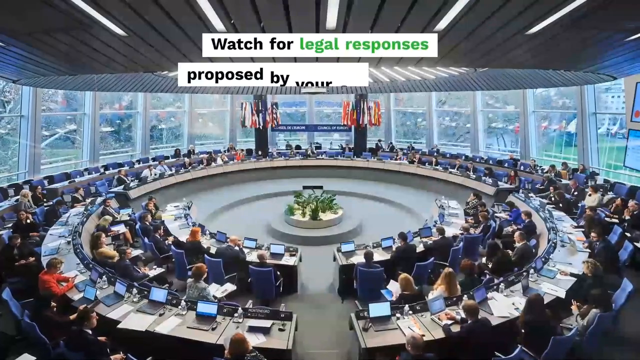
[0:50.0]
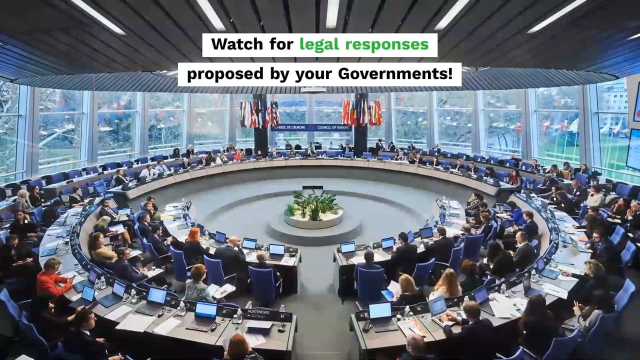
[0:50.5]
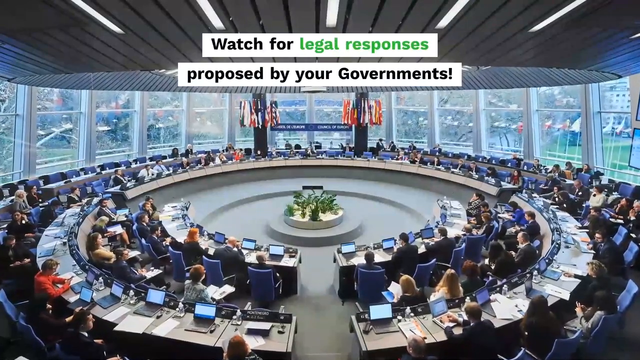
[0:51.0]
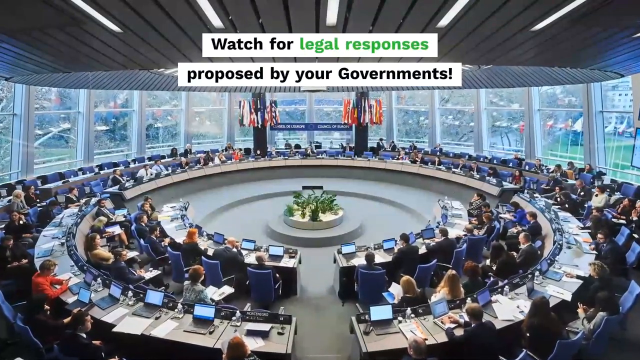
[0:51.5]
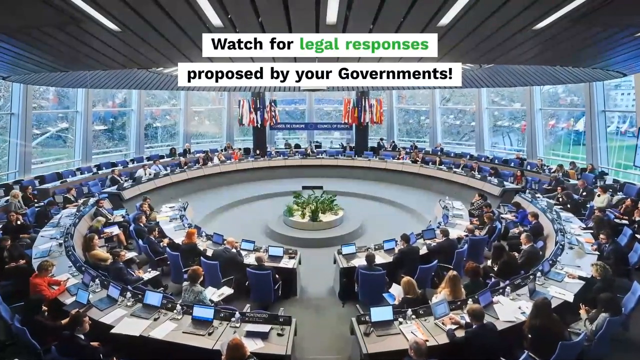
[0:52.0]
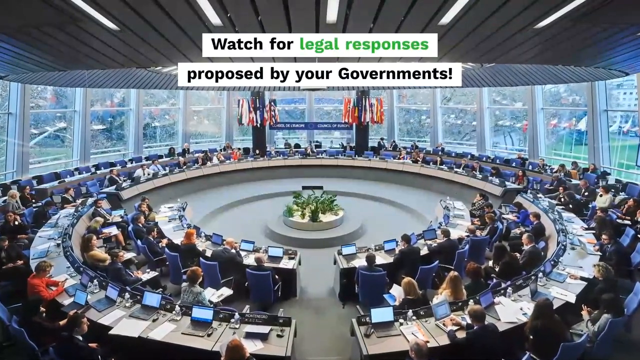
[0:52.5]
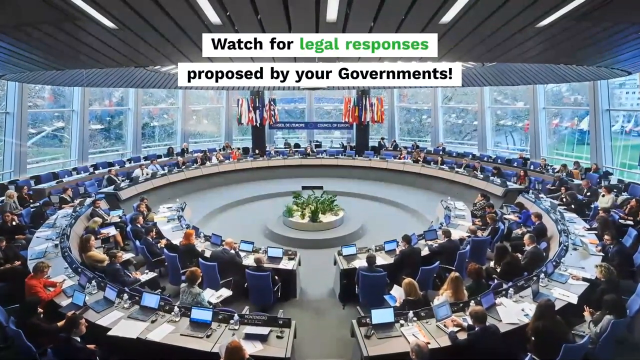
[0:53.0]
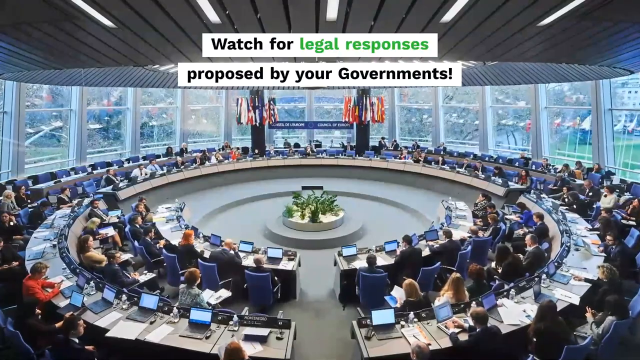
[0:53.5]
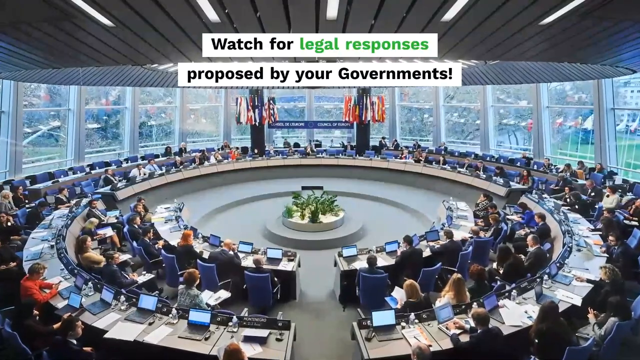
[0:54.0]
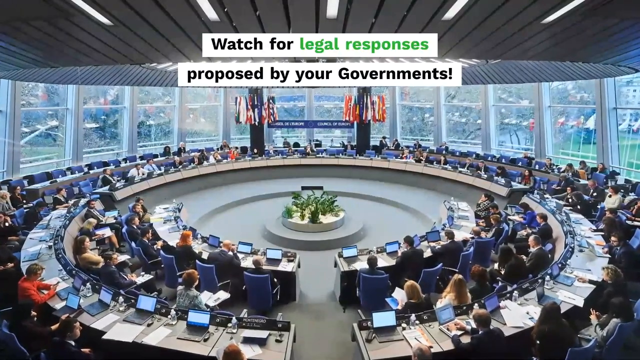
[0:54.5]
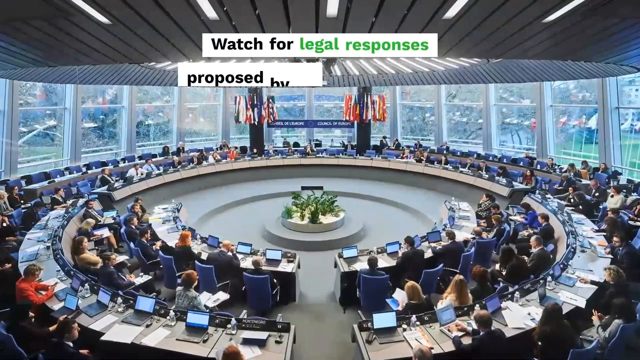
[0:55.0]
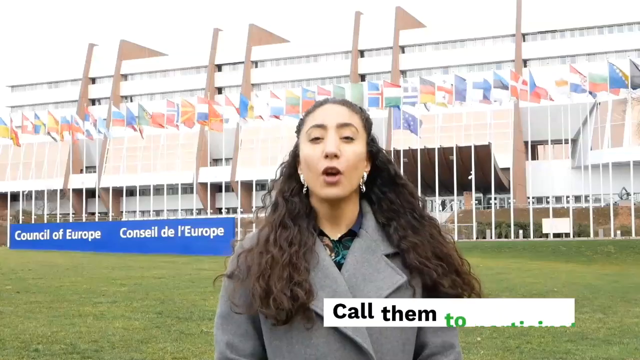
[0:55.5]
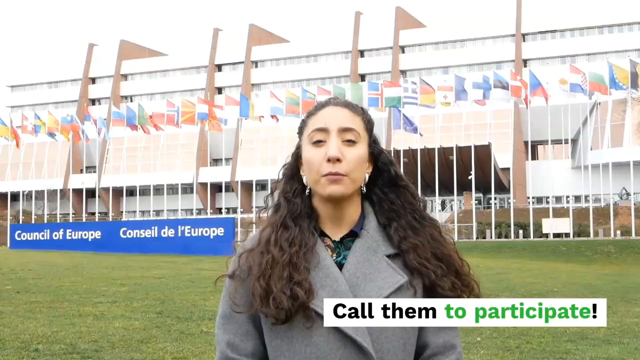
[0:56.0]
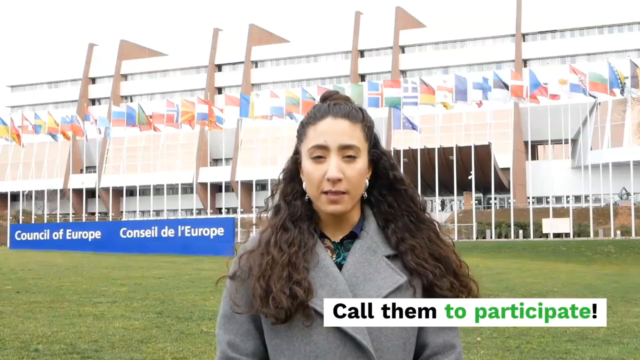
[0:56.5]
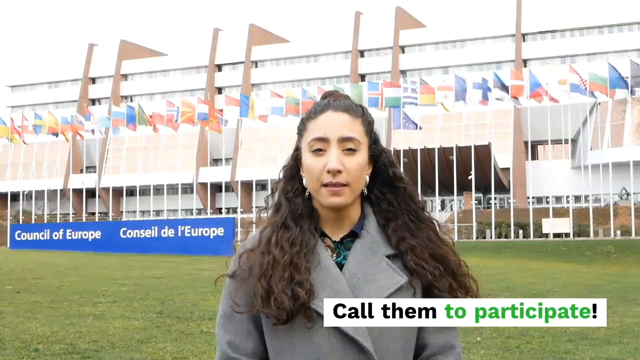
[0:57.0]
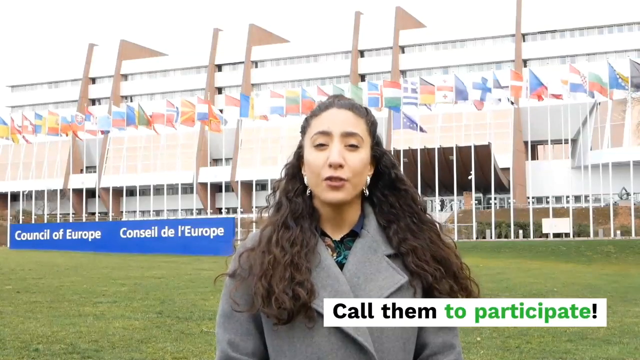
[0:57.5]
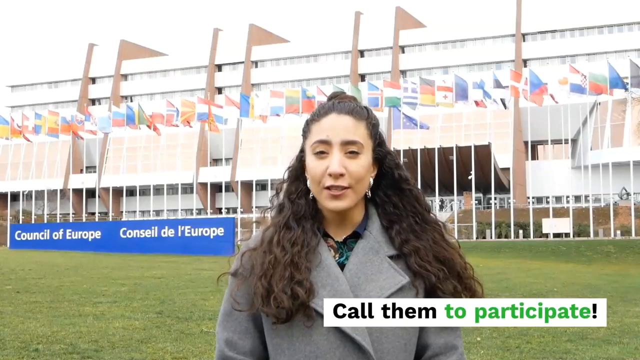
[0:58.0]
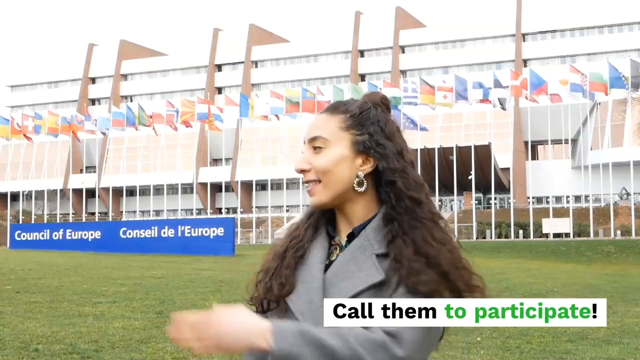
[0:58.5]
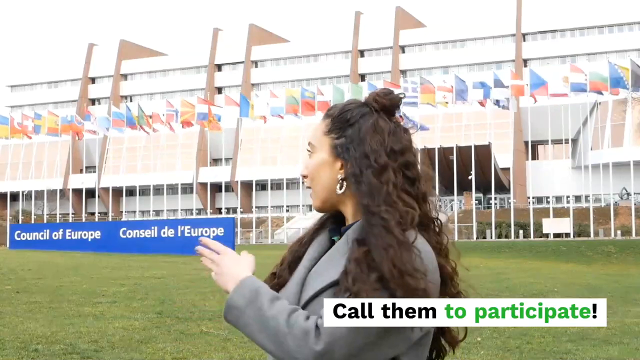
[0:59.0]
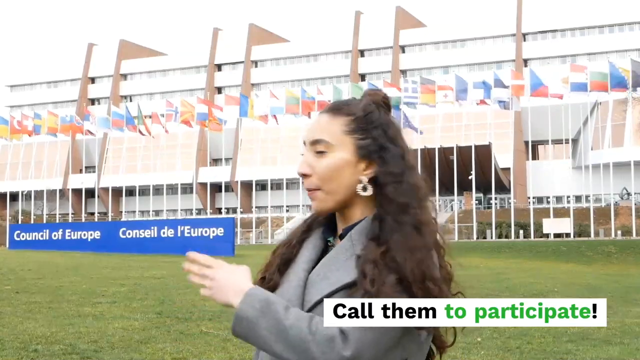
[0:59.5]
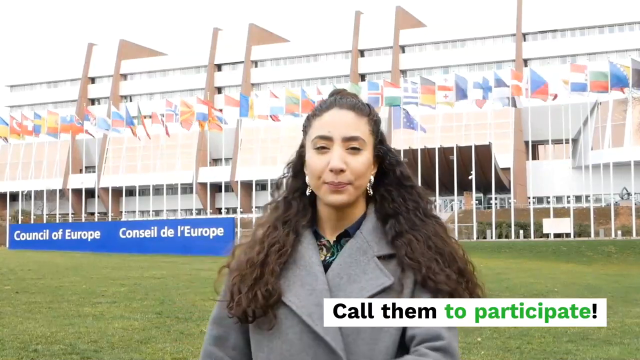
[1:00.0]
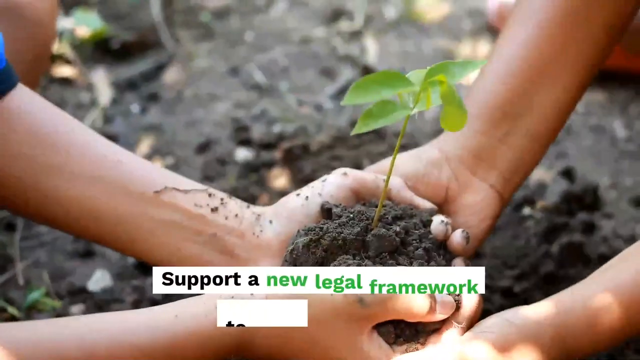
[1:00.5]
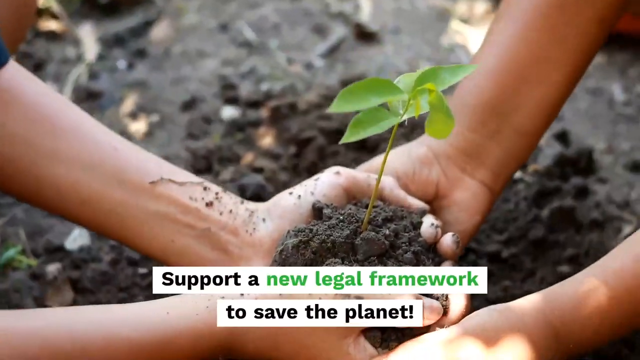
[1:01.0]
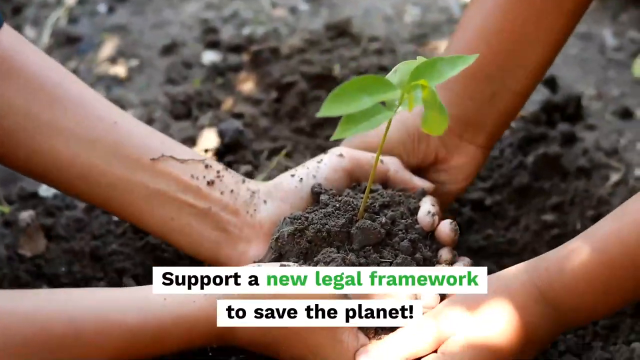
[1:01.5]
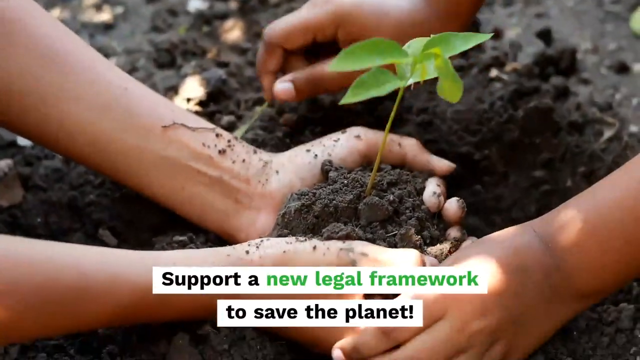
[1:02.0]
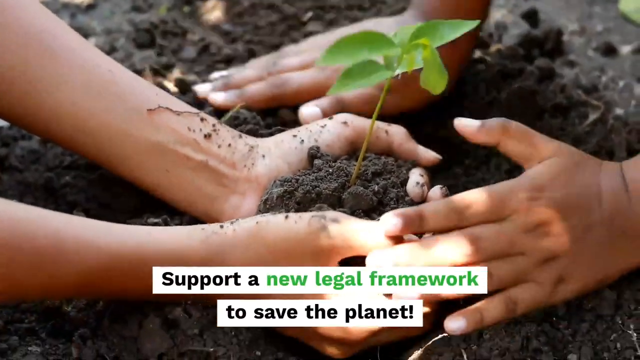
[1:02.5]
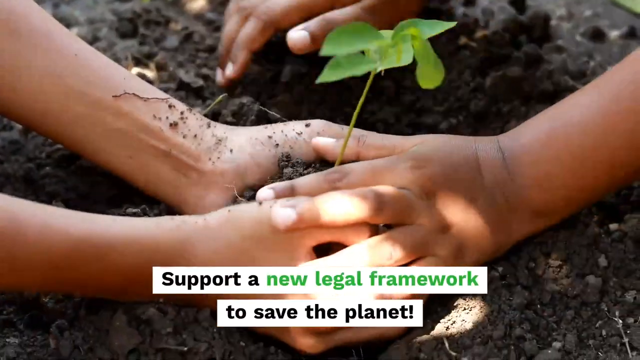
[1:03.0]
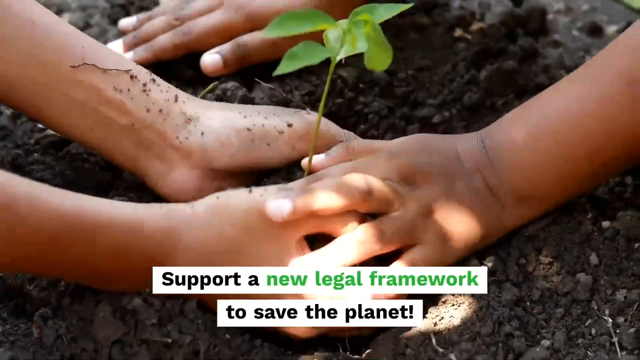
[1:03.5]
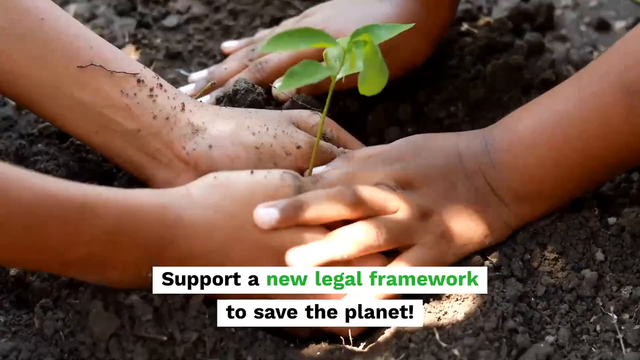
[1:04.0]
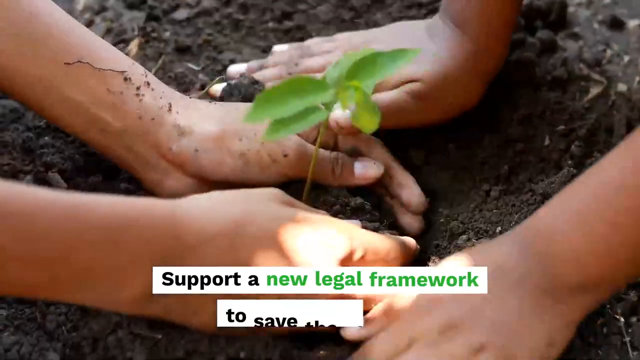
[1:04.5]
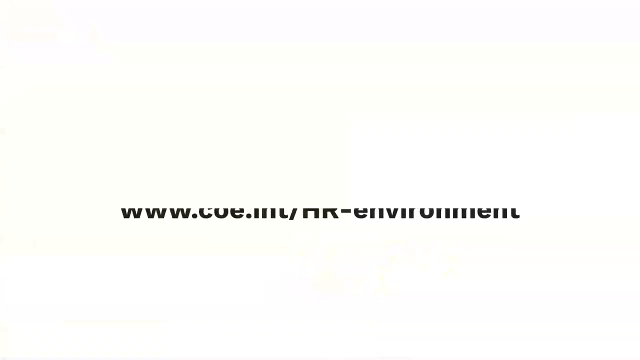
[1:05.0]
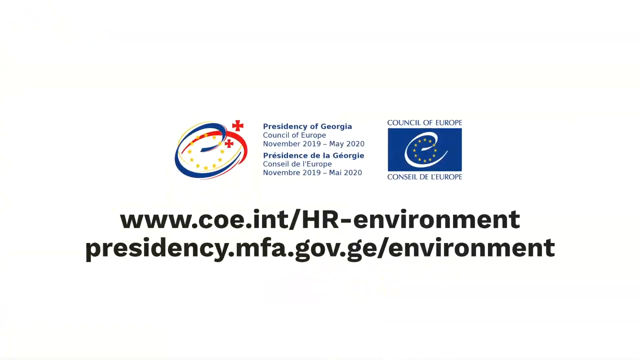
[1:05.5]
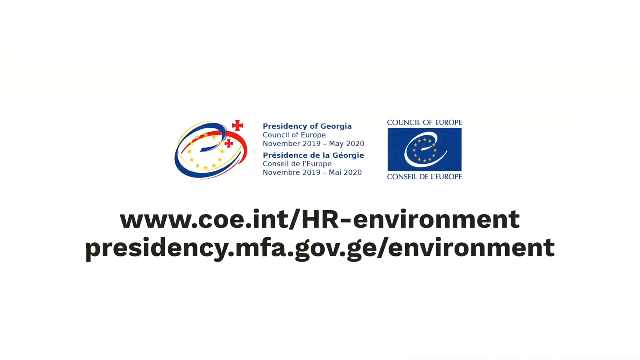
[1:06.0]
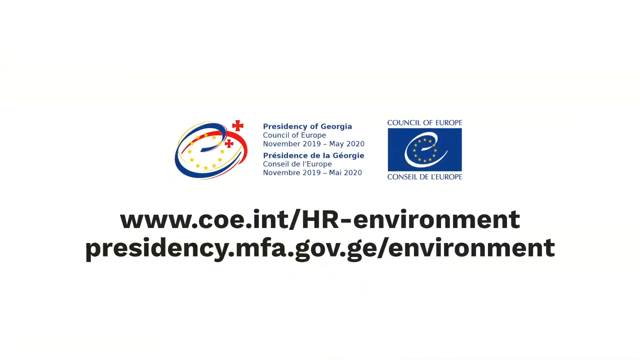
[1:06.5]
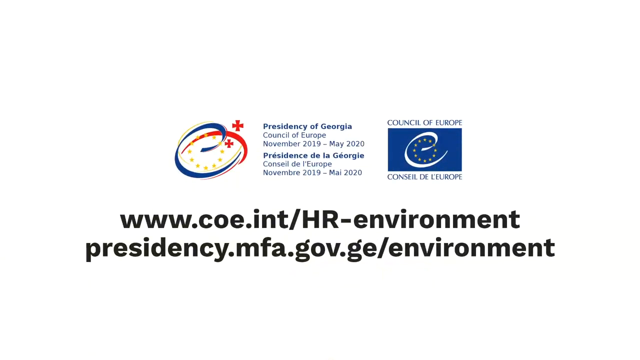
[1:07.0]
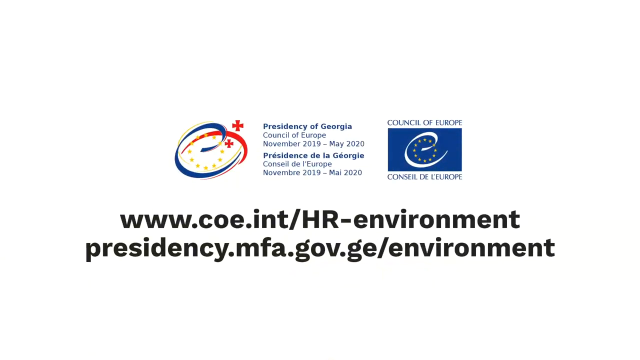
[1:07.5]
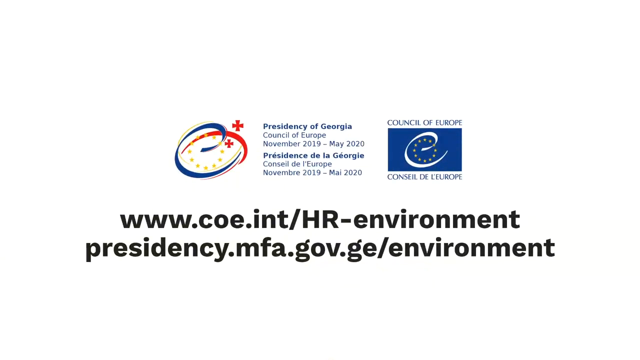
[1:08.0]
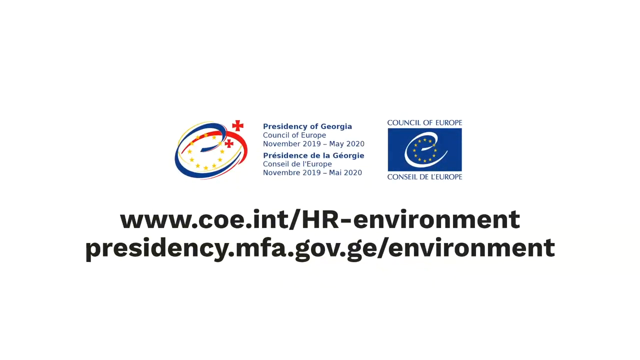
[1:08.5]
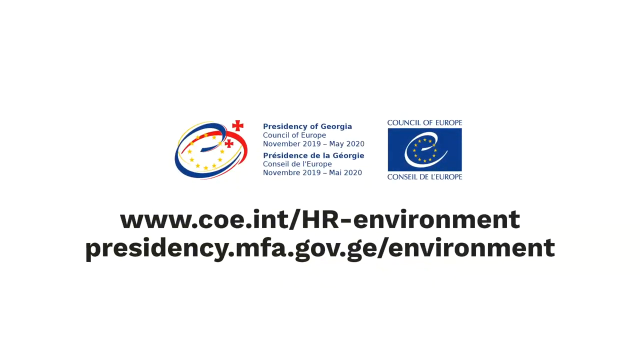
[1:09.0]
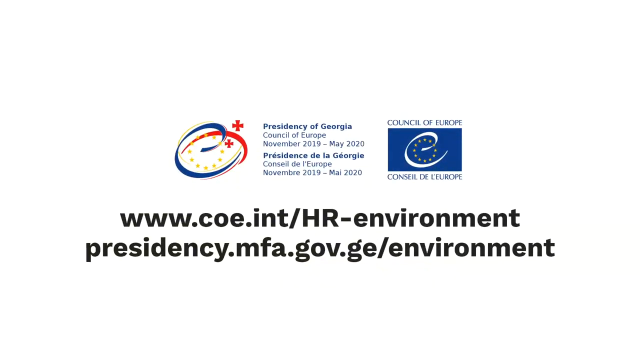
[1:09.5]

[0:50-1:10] A block of ice is shown with text reading "people speak a lot about climate change but less about what they must do", followed by text reading "a sustainable future requires immediate action". A picture of children follows with text asking what planet we will leave our children. Many people pass by, with text reading "they have the right to ask" over what seems to be a riot. A man reporting appears wearing a scarf, with text reading "how do we hold those who damage our planet accountable". Another woman appears, also reporting, with a train passing by in the background. A man wearing a full neck then appears, with the question "do we need a new treaty to uphold the right to a healthy environment?" A flag is then shown being waved by the wind.